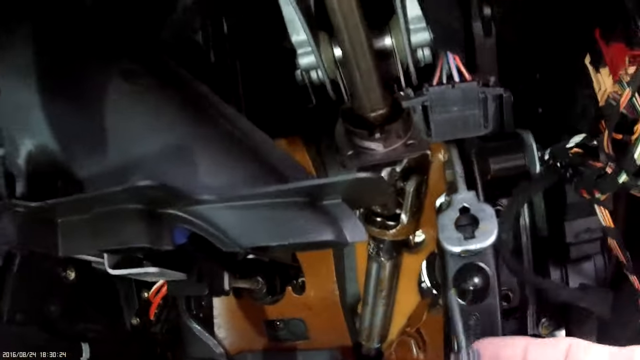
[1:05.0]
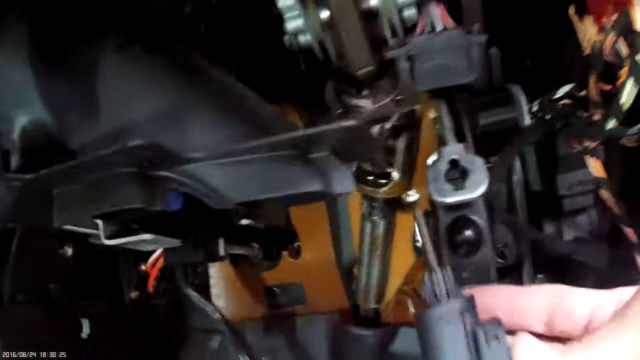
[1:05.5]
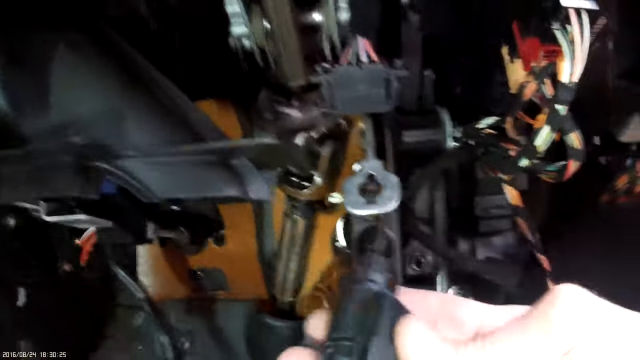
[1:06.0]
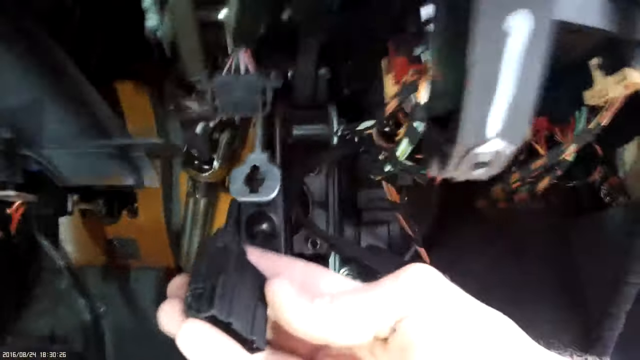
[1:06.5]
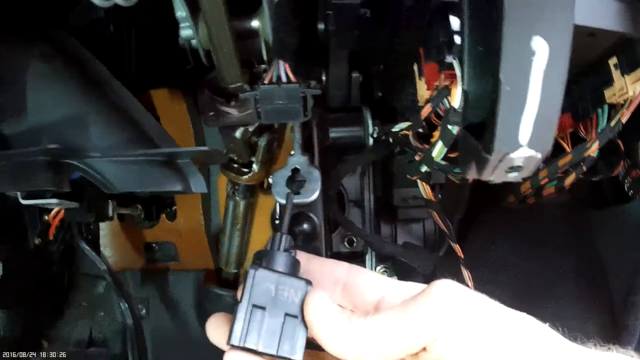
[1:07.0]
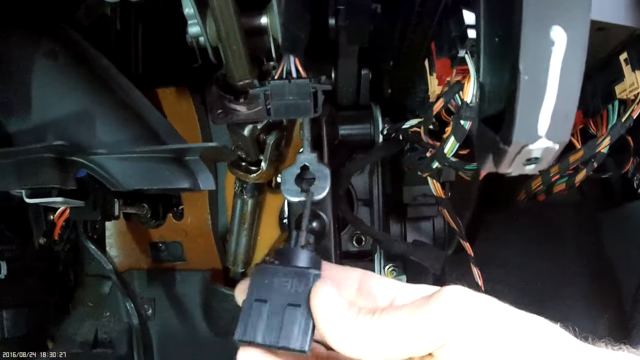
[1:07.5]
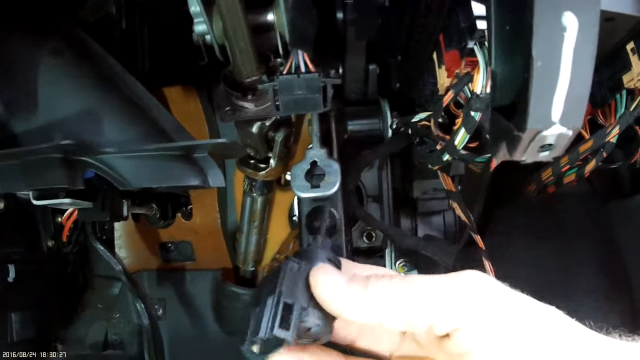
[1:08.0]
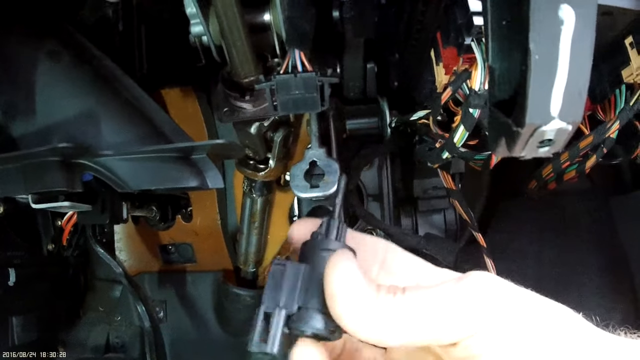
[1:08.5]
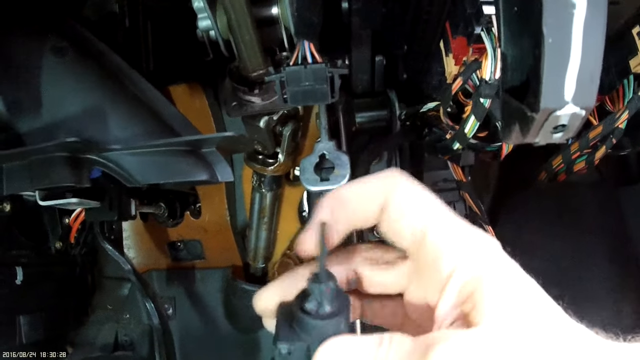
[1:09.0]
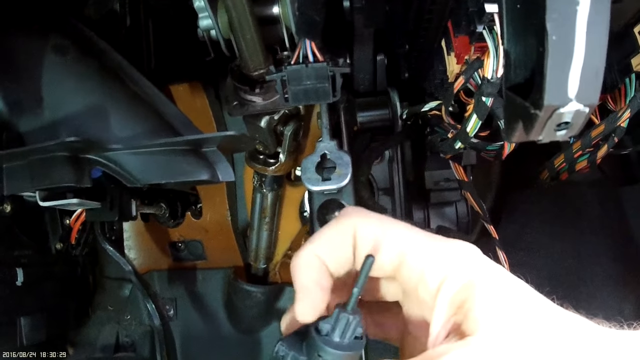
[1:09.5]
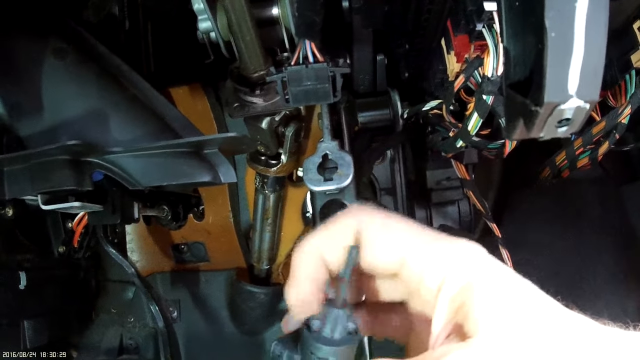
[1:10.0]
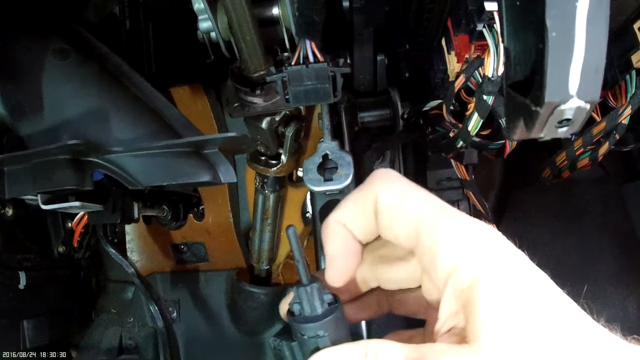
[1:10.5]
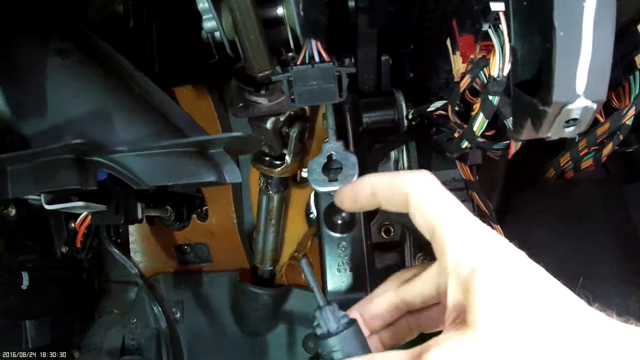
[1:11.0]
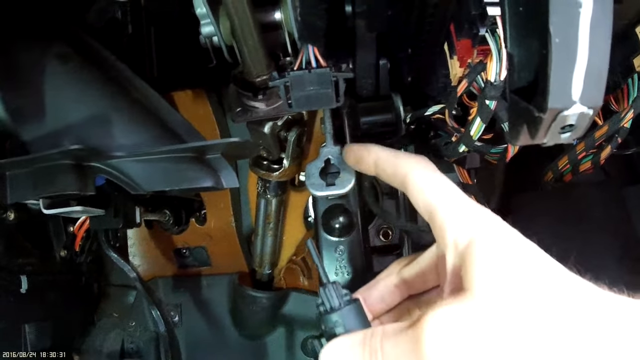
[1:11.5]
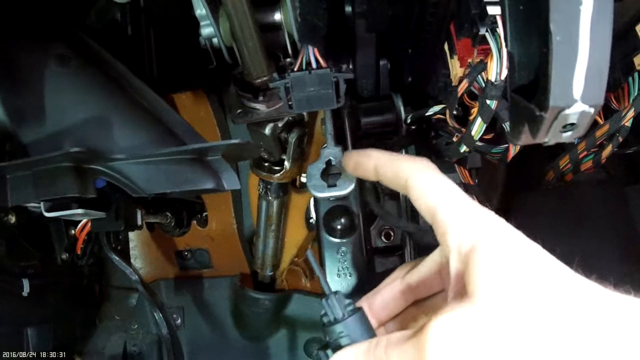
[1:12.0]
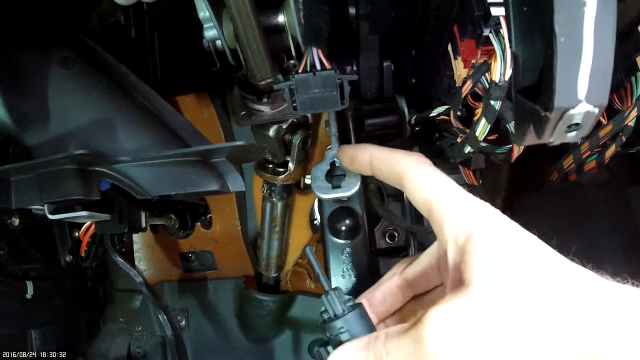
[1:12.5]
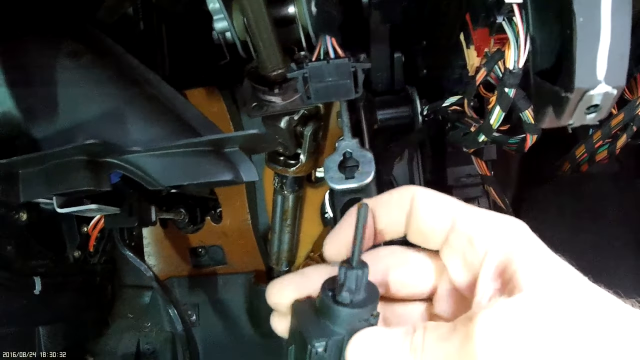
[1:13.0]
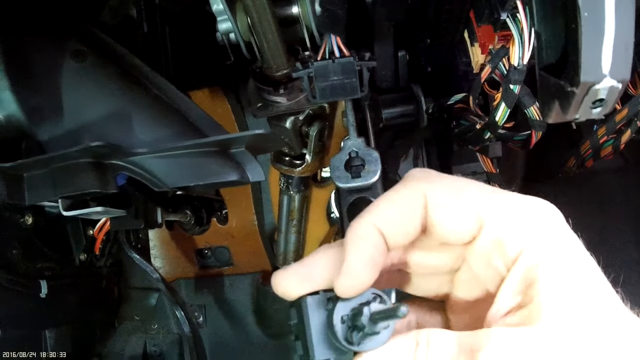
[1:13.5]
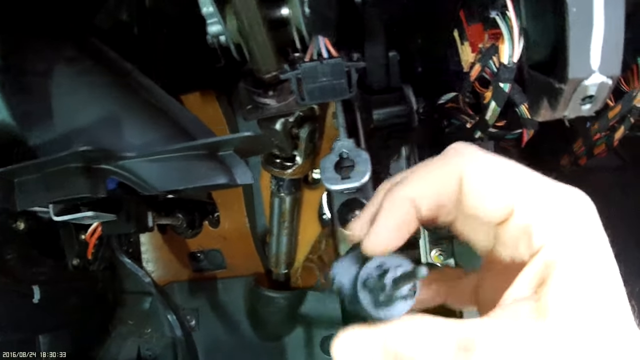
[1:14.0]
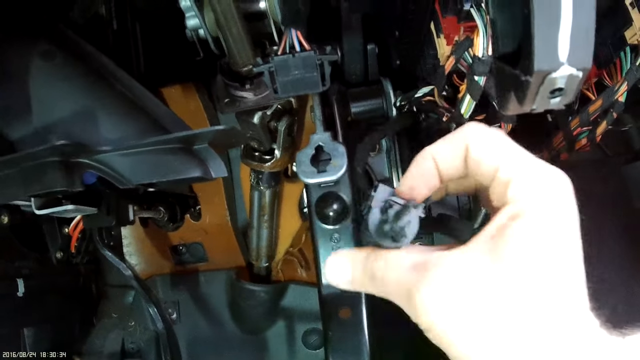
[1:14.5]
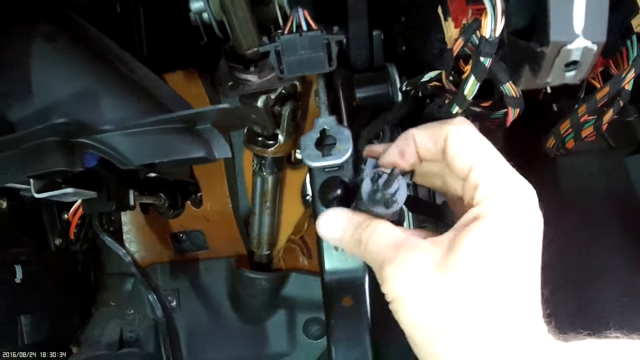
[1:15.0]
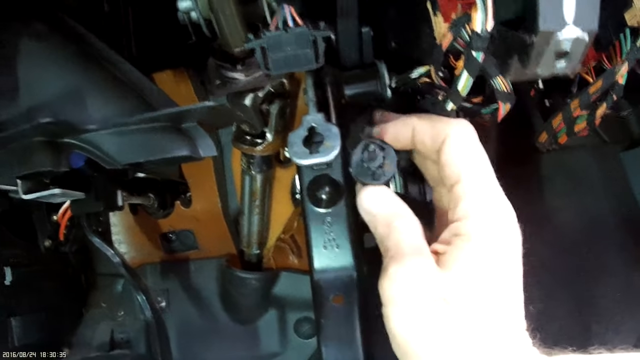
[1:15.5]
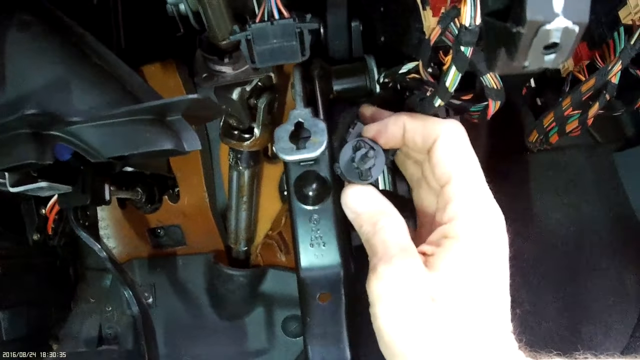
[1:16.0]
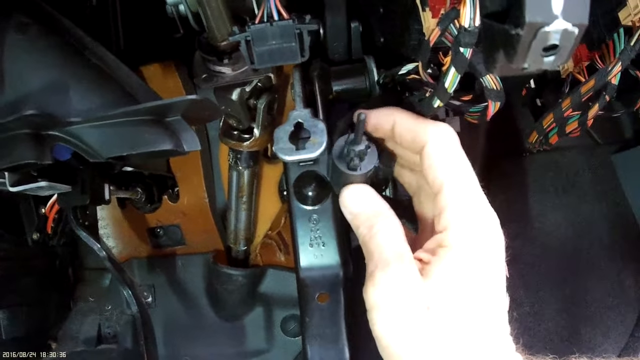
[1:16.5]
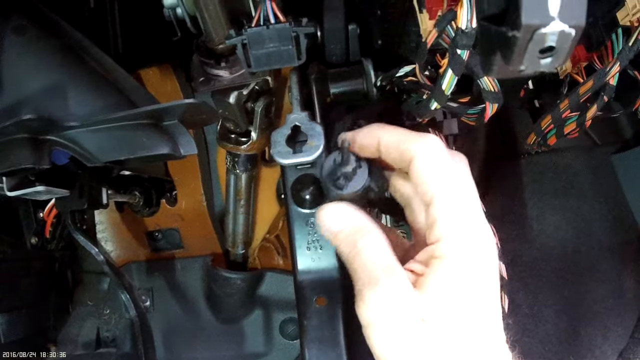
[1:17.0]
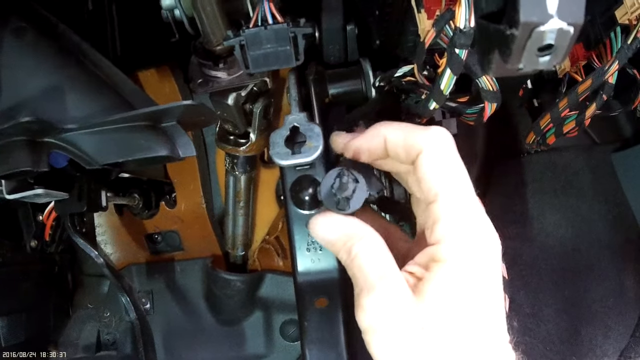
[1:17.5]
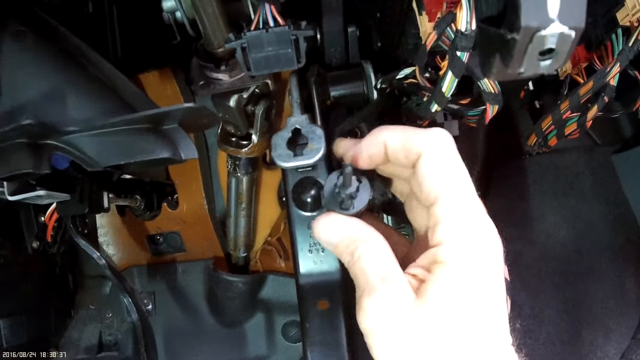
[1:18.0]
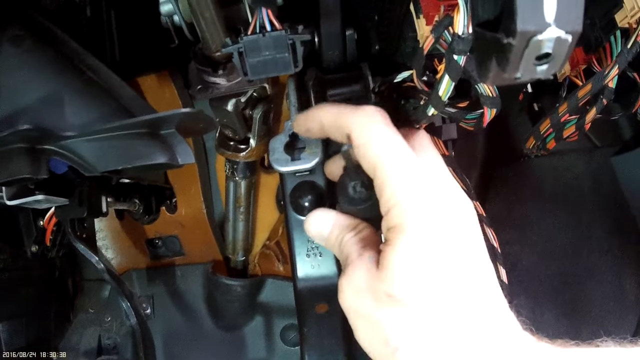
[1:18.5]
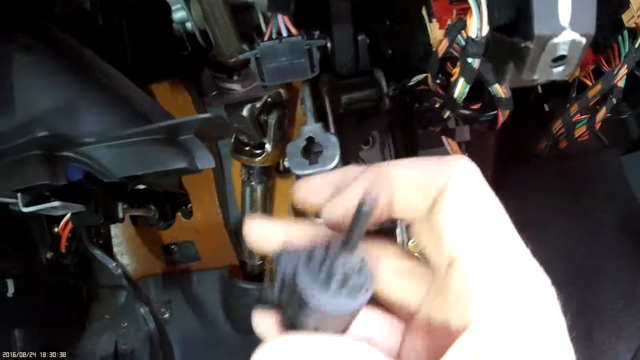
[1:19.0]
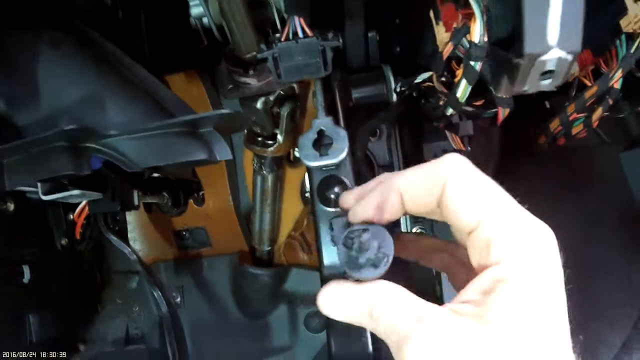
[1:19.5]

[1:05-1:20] Where the piece was removed, there is now an open spot in the metal piece, where he is going to insert a new piece, presumably the brake switch. He points to show how to put the piece in correctly, and with his right hand he shows how the module should sit in the stainless steel piece that holds it. He keeps pointing to show that certain divots should line up with the pre-fabricated holes in the stainless steel piece.